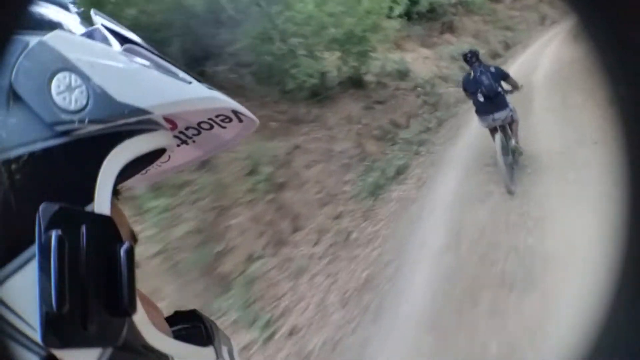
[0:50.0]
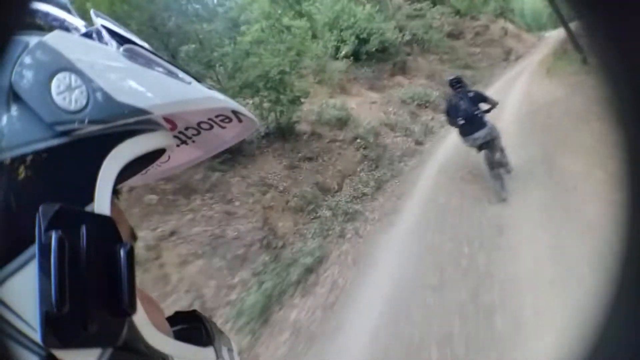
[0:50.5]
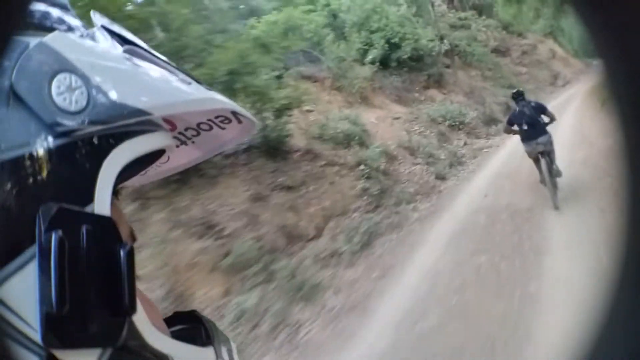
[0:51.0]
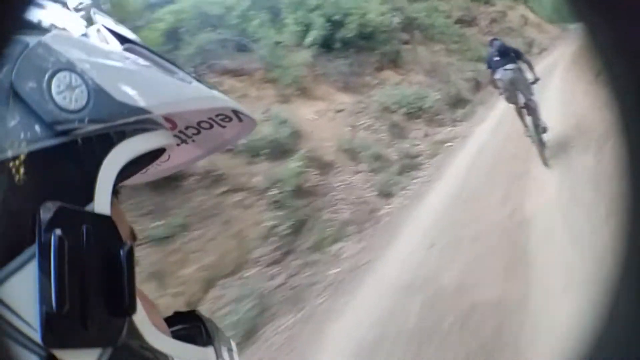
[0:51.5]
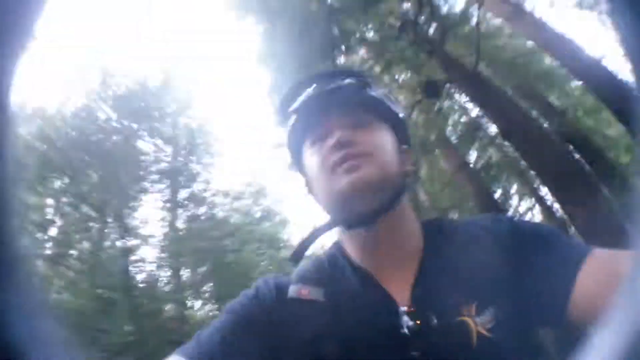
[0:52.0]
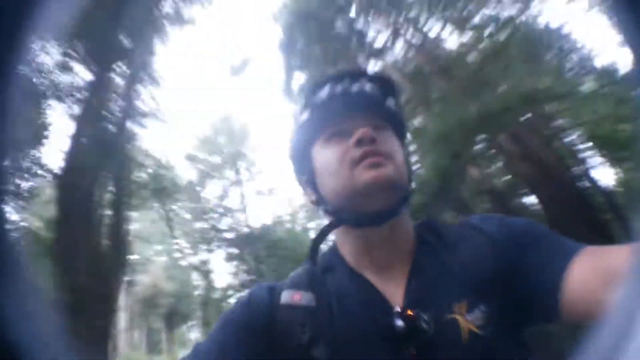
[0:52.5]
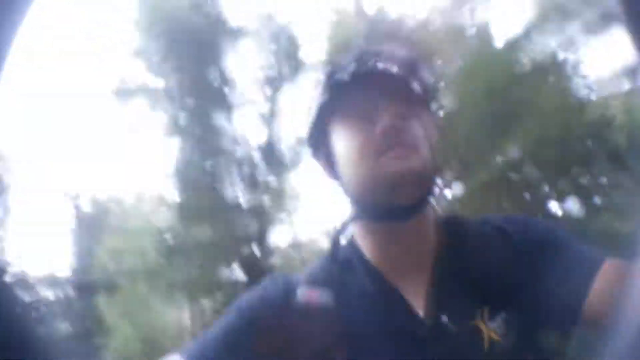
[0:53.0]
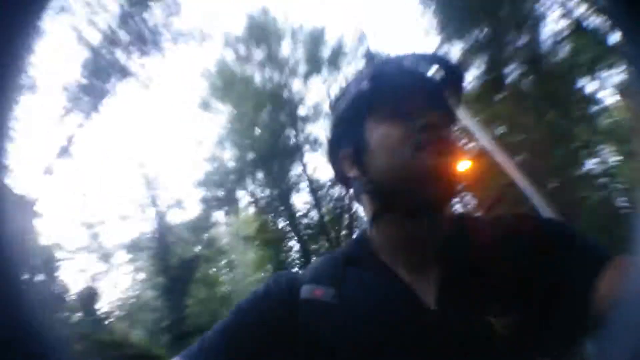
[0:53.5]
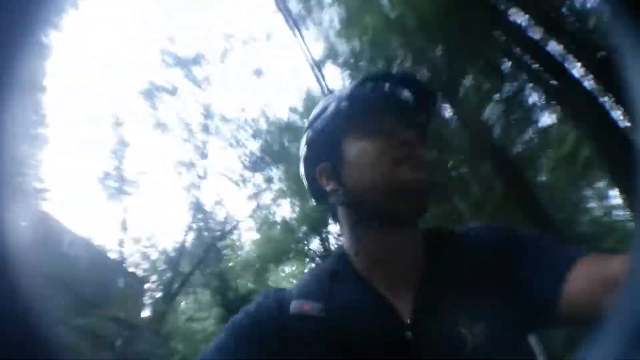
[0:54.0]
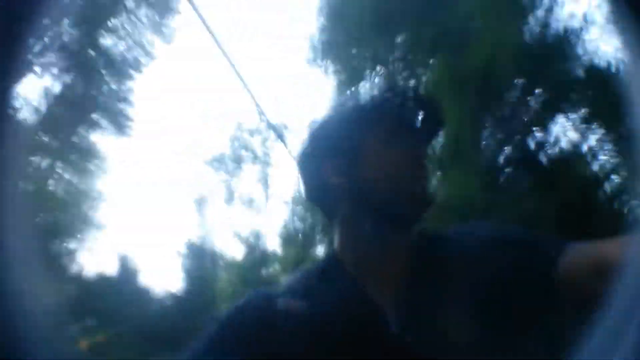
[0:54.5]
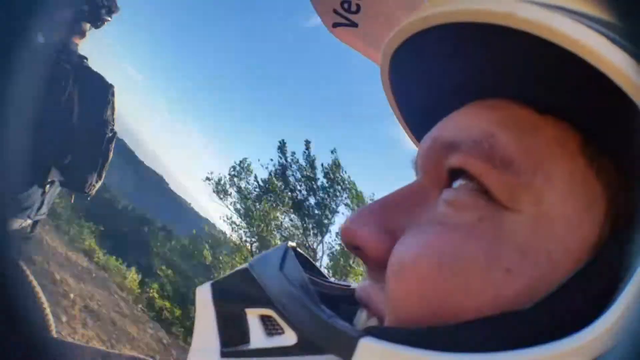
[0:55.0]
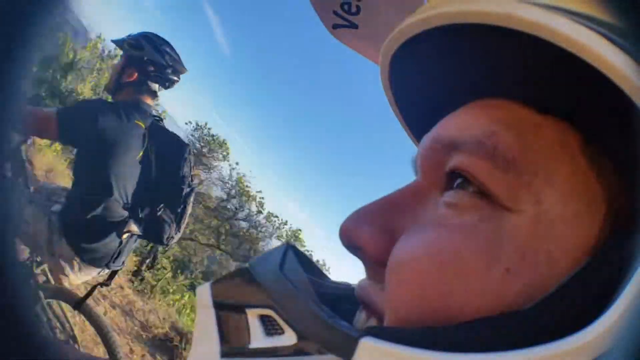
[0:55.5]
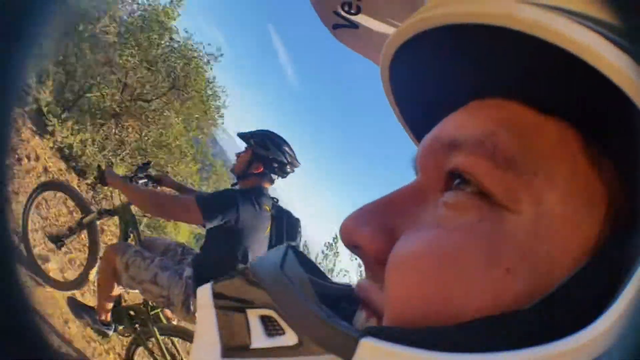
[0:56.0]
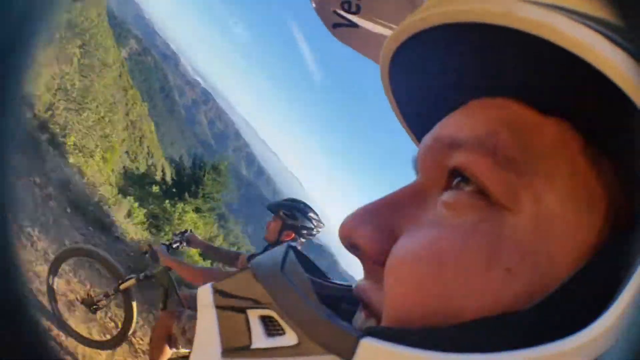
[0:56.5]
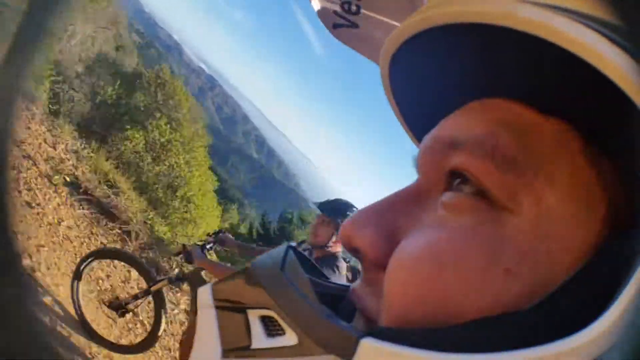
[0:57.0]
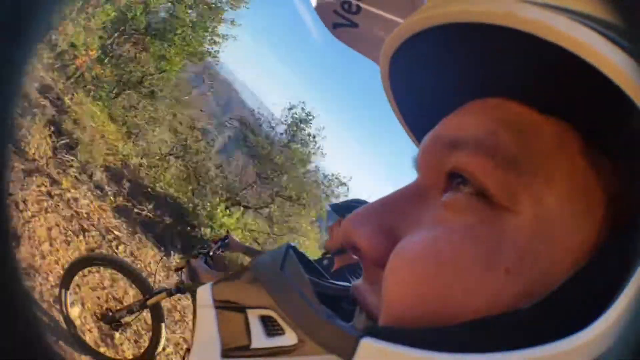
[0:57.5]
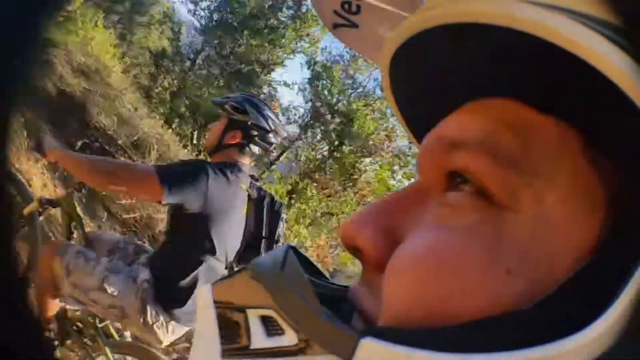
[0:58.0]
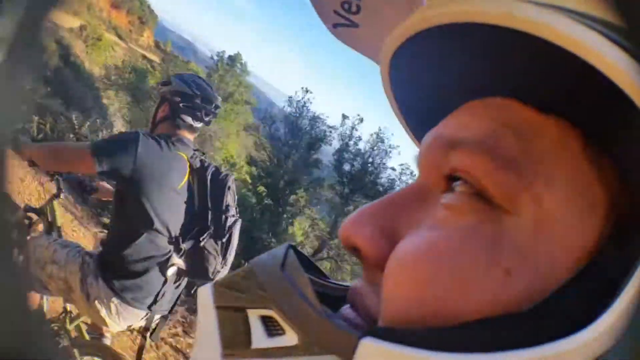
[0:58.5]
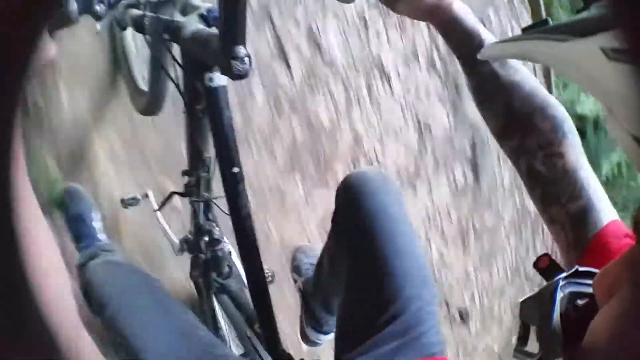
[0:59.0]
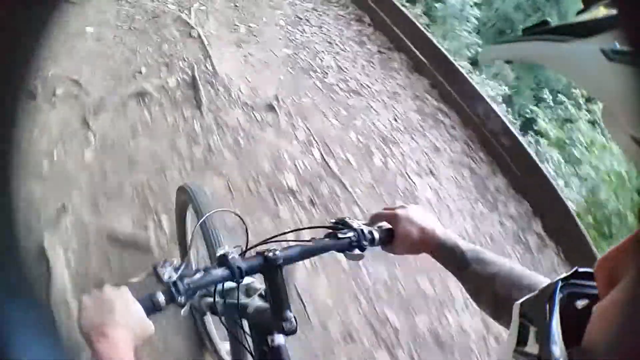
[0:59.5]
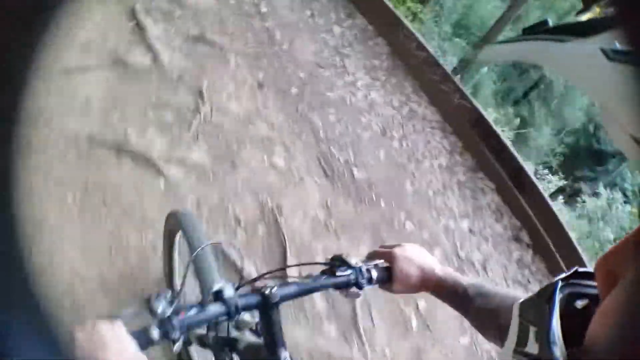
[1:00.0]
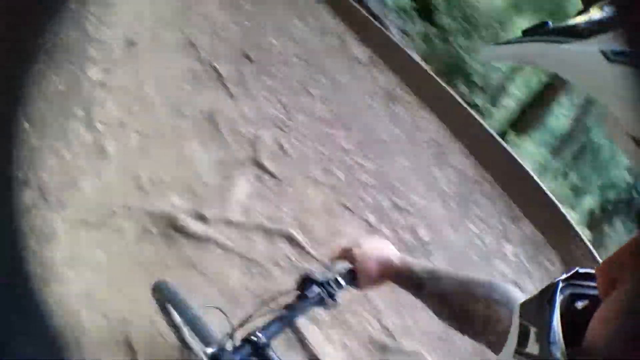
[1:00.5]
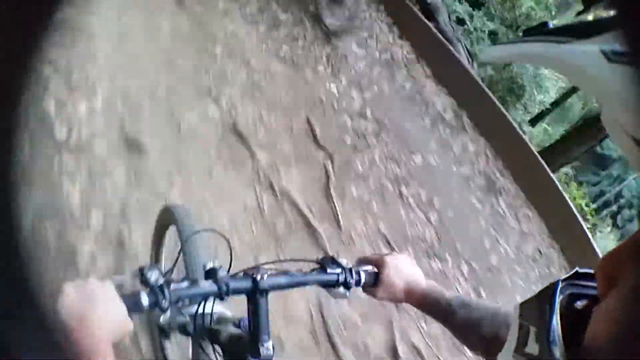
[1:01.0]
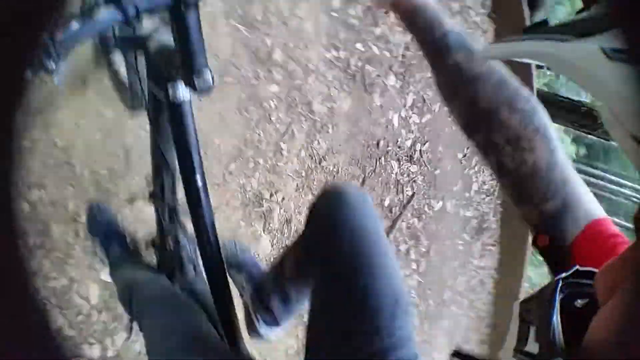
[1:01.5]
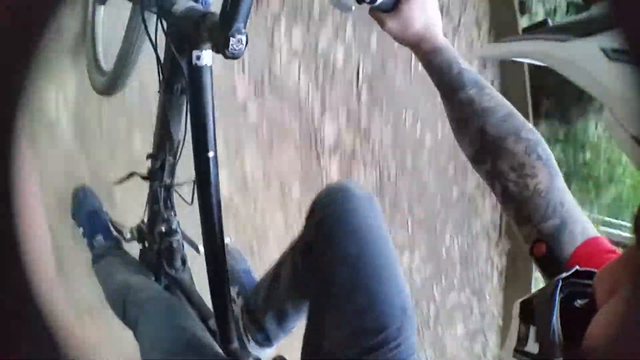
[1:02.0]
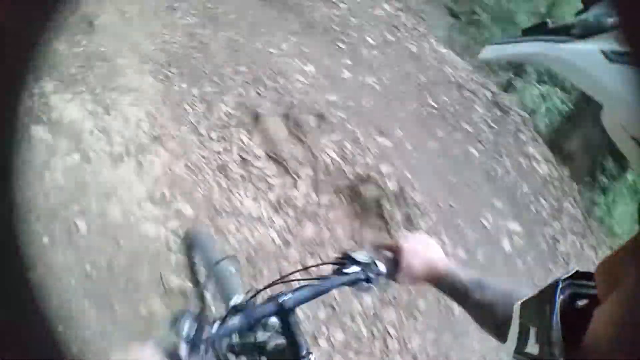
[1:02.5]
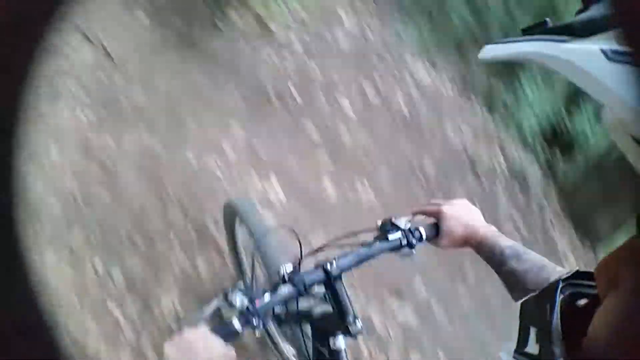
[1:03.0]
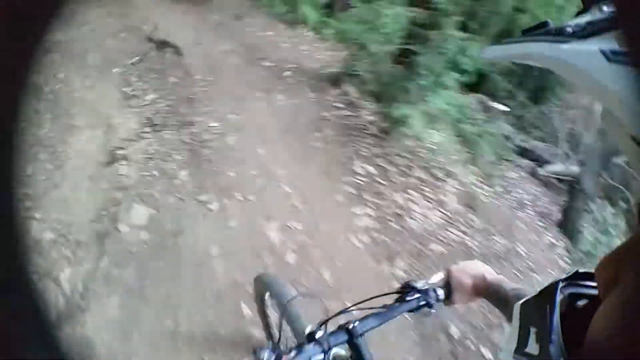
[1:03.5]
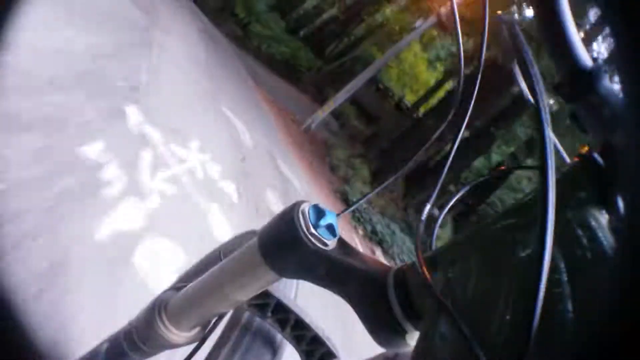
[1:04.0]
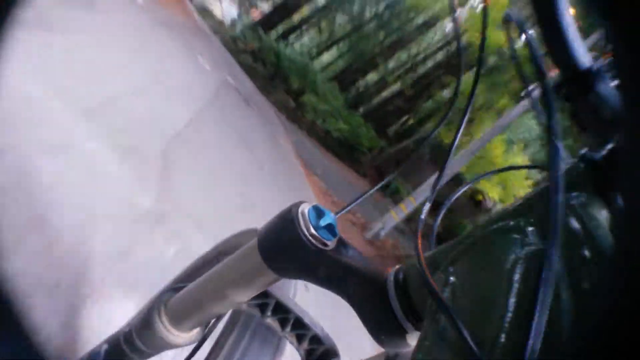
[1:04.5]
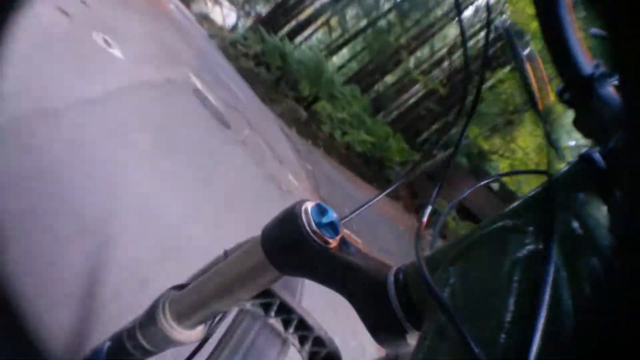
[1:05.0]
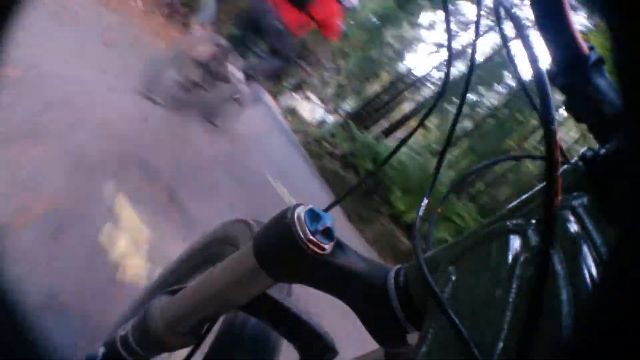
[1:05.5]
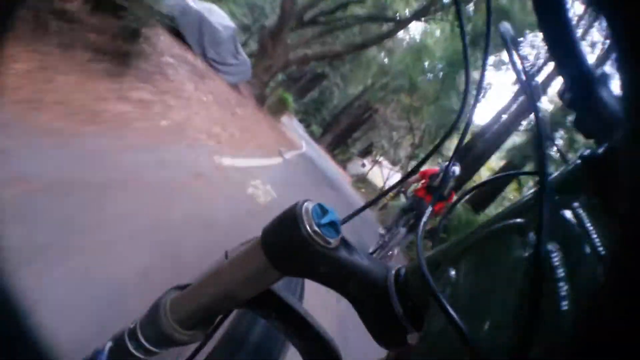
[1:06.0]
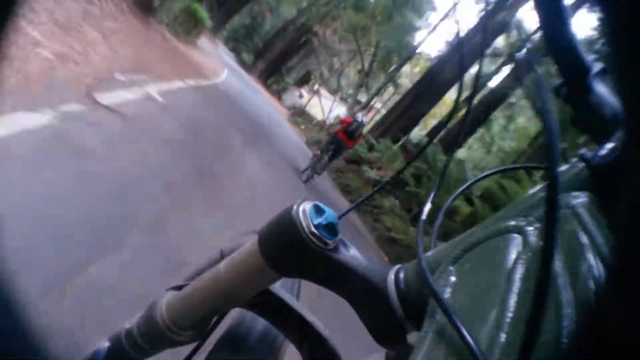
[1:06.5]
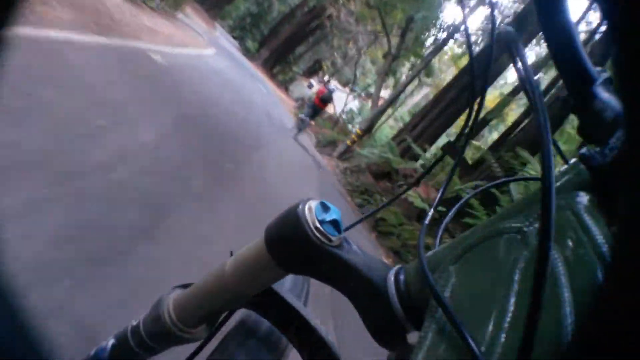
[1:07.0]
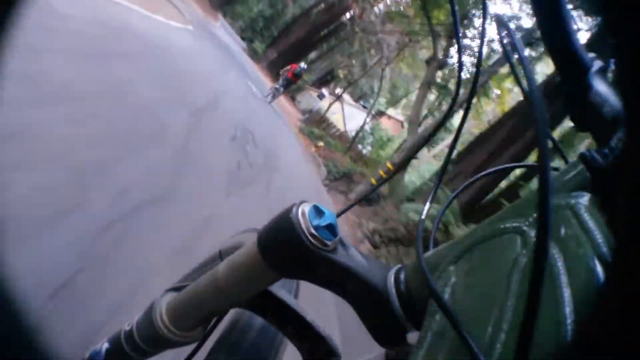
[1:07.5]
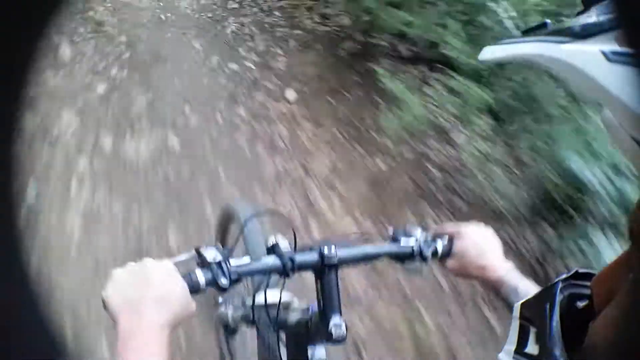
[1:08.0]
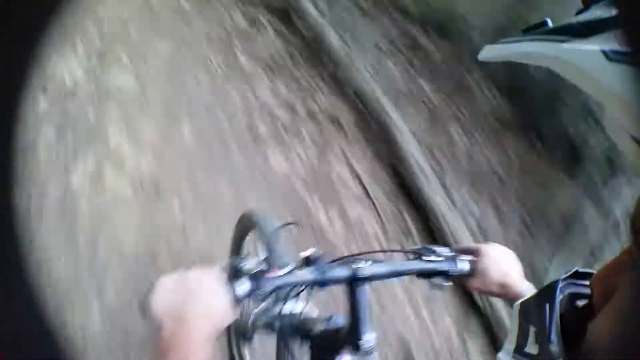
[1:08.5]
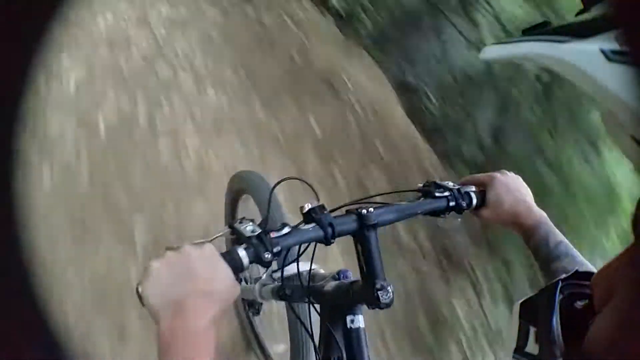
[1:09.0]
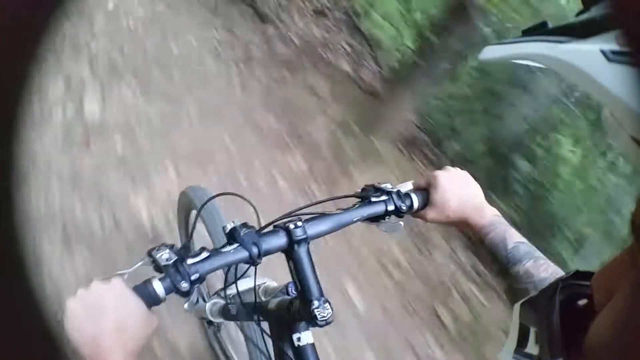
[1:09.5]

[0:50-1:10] Outdoors in daylight, two men ride their bicycles, each wearing a helmet and fully geared for safety. Cameras are hooked up on both sides of their helmets and apparently in front as well. The bicyclist in front wears the dark t-shirt, and then a shot shows him from below his face, looking upward, with trees and greenery along his ride. The second man, also young, rides alongside as they head in an eastward direction. The view then shows their perspective riding straight ahead through a very lush green area, with mountains in the background behind them. Everything is quite green, and their clothing suggests a warm climate. Quick shots show their hands holding on to the steering of their bicycles.